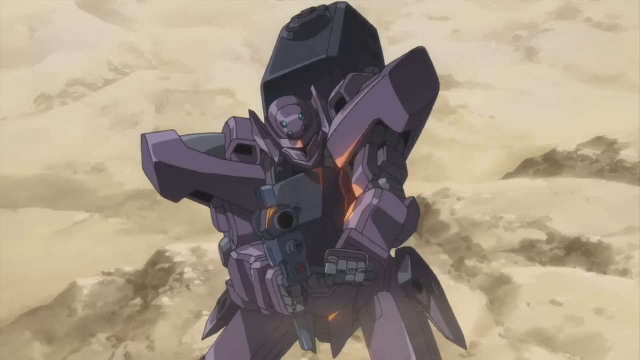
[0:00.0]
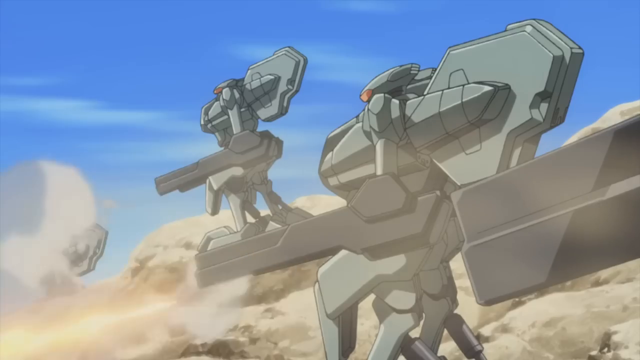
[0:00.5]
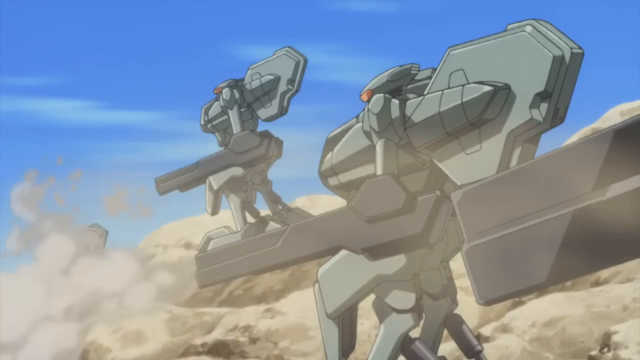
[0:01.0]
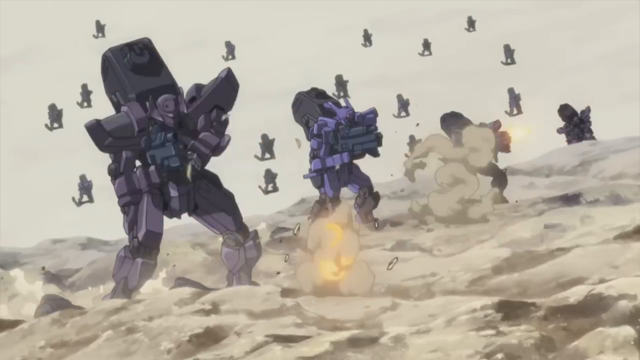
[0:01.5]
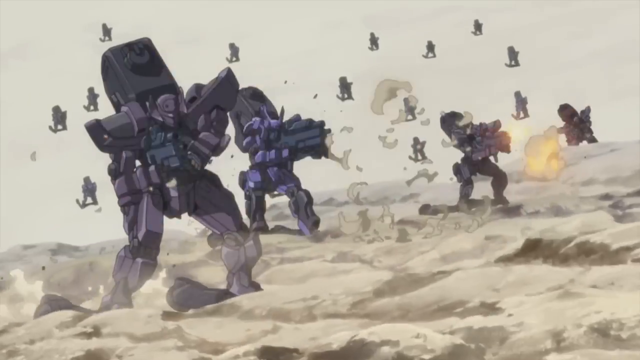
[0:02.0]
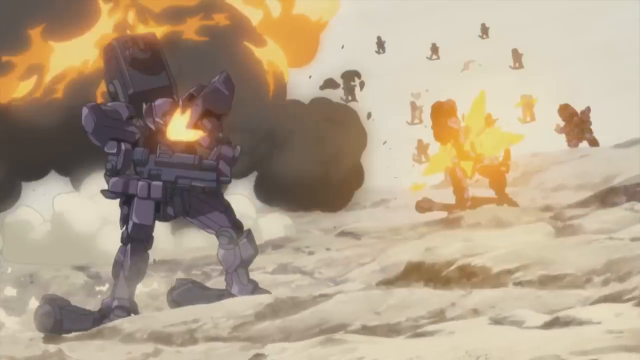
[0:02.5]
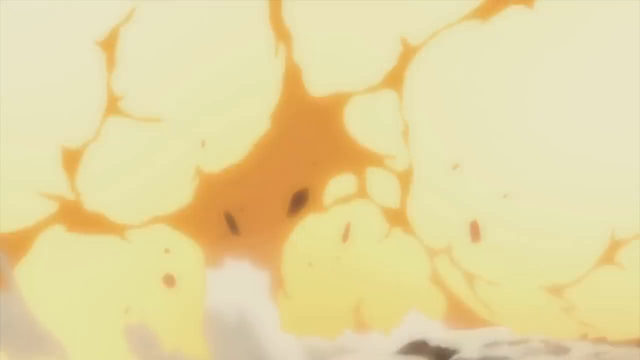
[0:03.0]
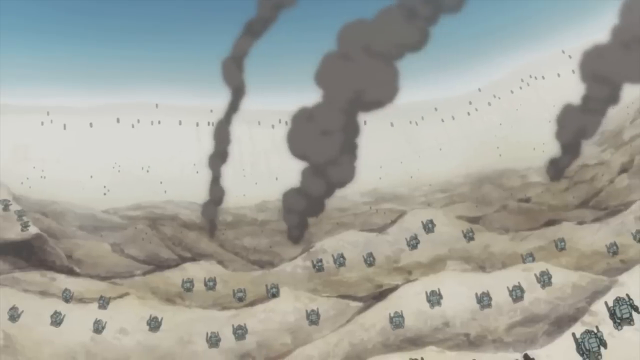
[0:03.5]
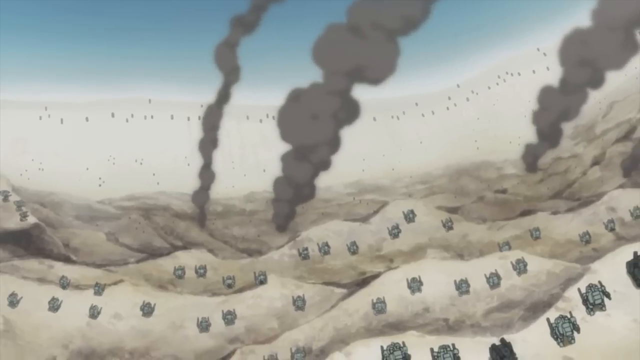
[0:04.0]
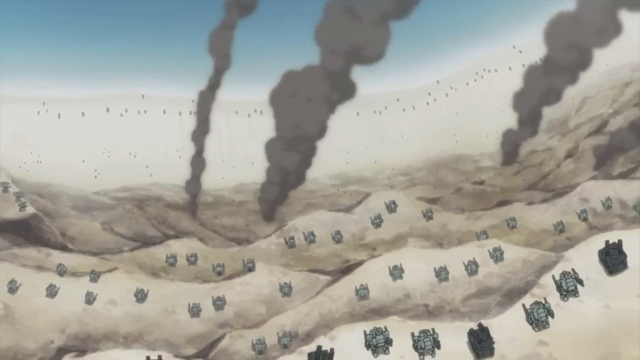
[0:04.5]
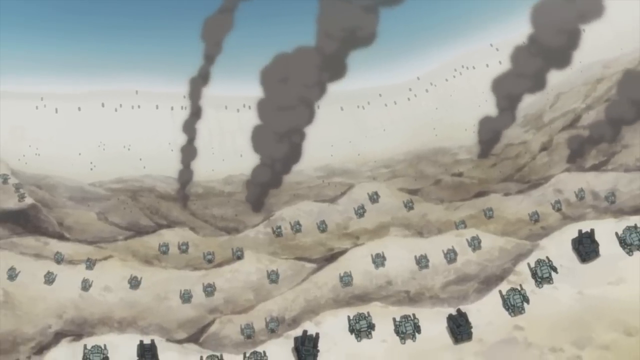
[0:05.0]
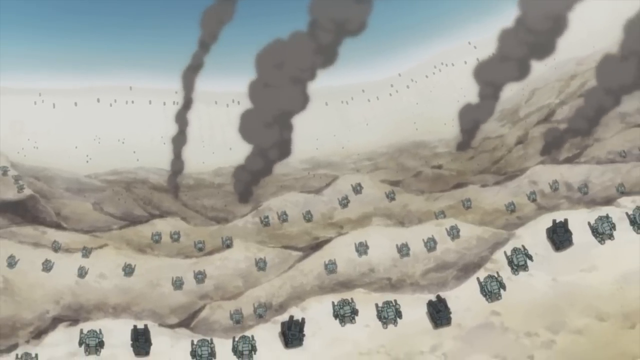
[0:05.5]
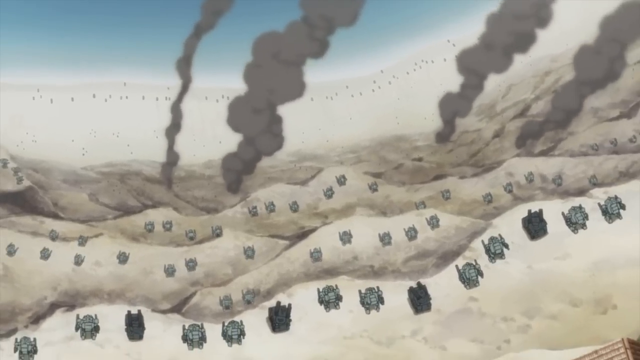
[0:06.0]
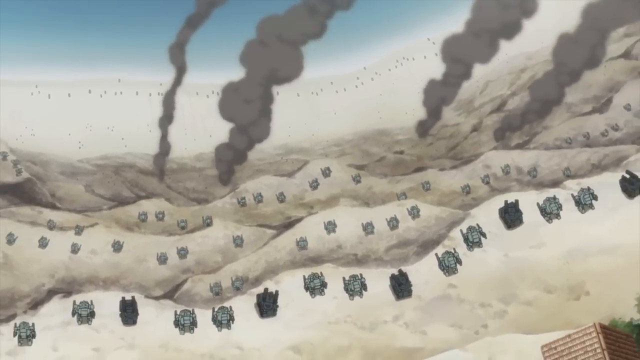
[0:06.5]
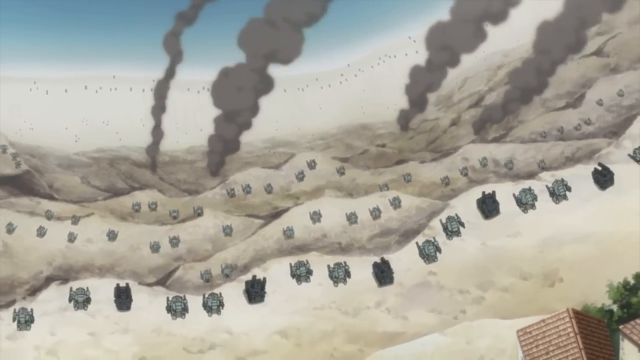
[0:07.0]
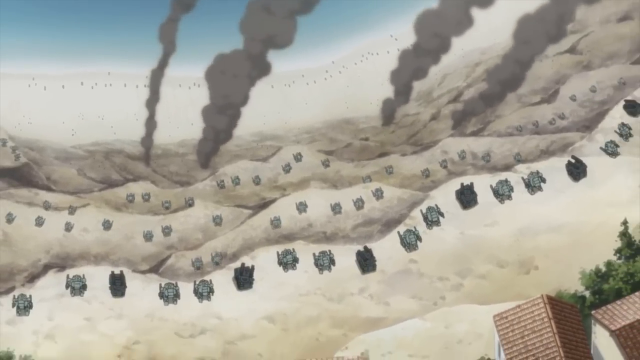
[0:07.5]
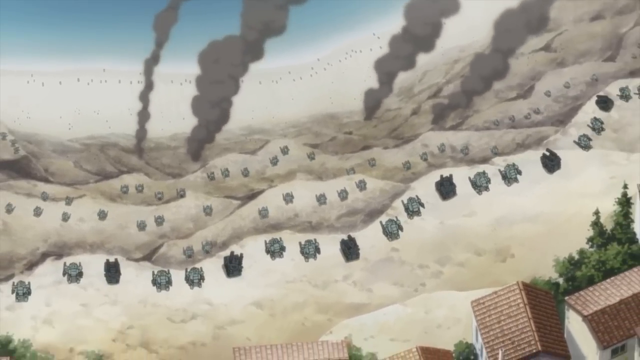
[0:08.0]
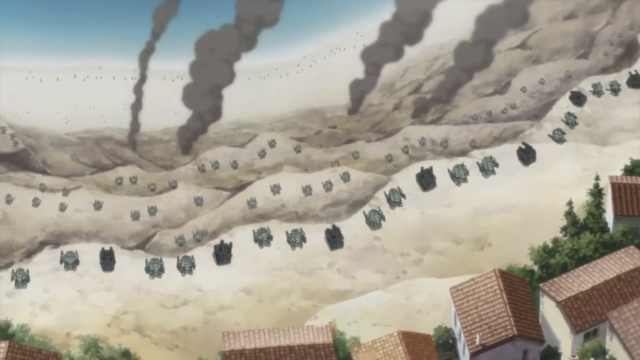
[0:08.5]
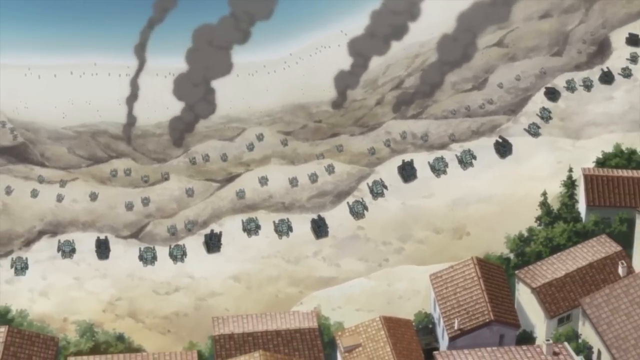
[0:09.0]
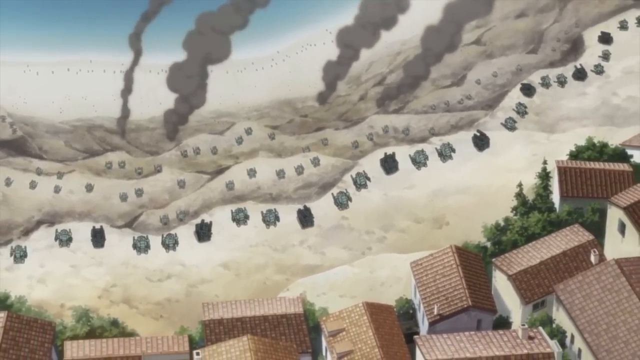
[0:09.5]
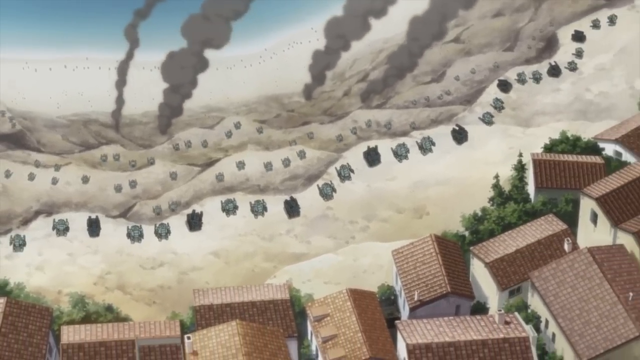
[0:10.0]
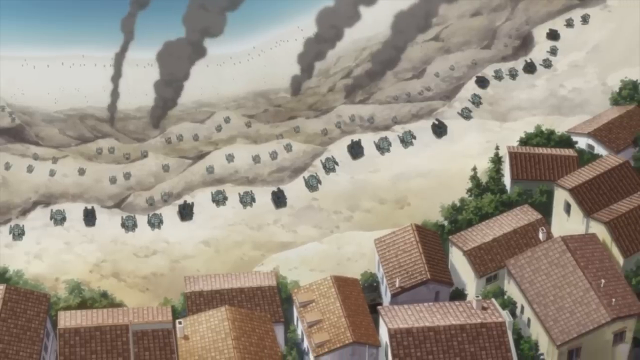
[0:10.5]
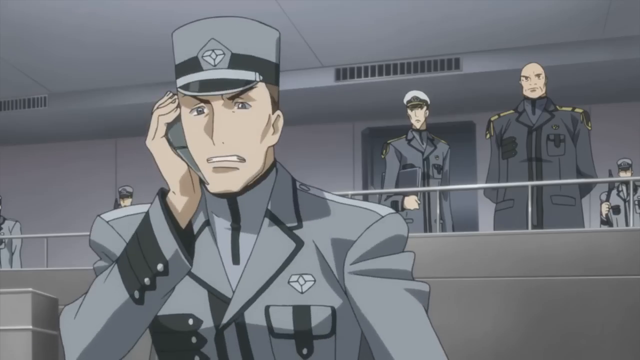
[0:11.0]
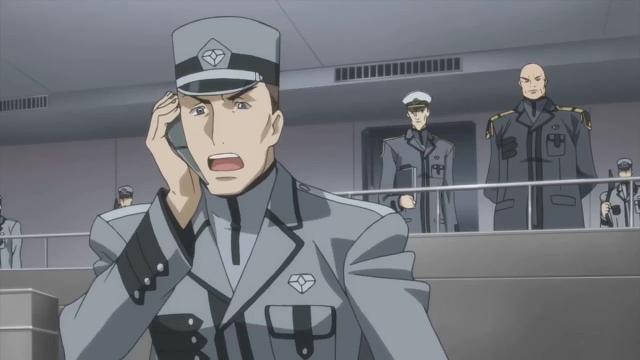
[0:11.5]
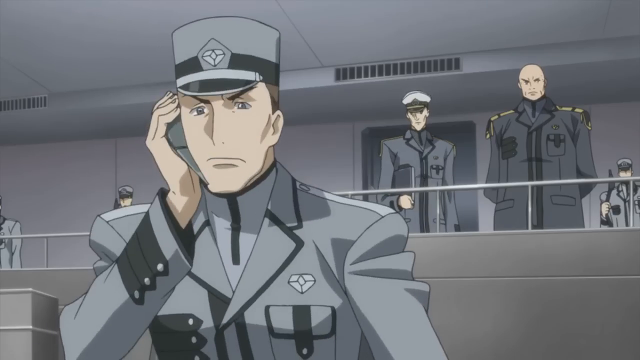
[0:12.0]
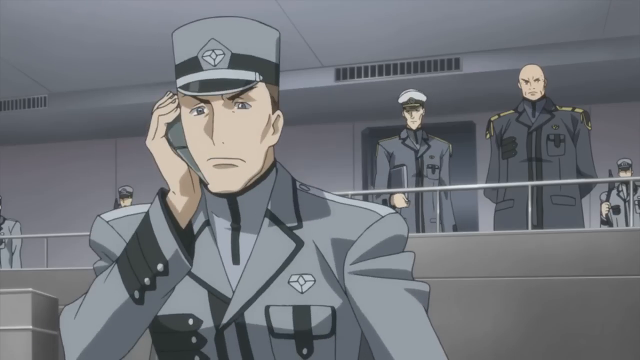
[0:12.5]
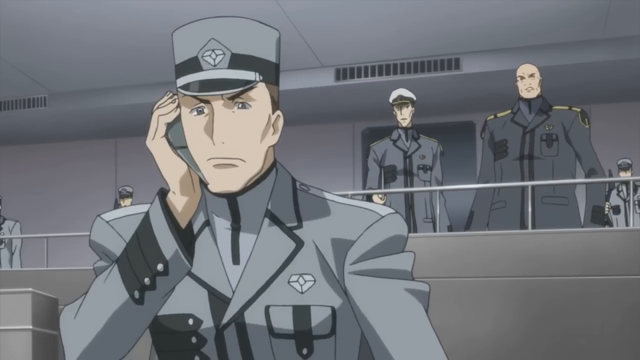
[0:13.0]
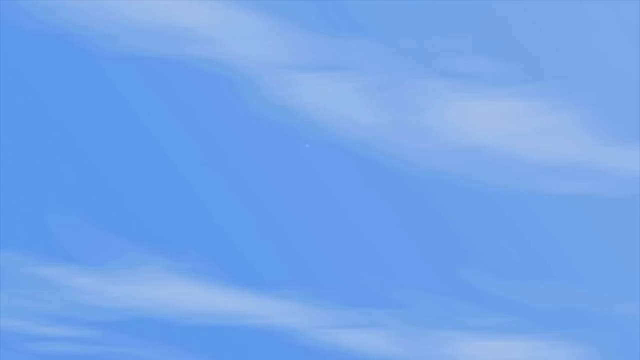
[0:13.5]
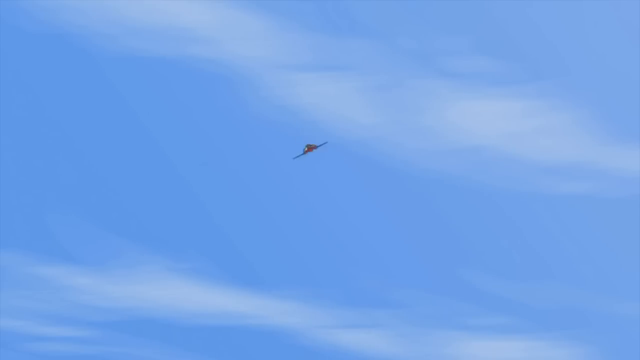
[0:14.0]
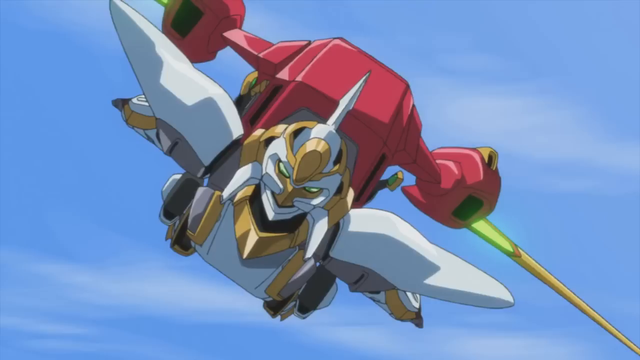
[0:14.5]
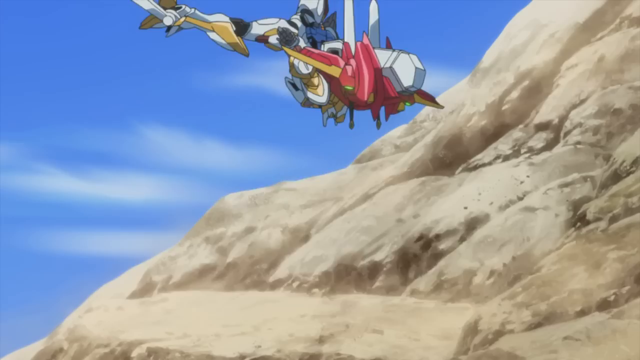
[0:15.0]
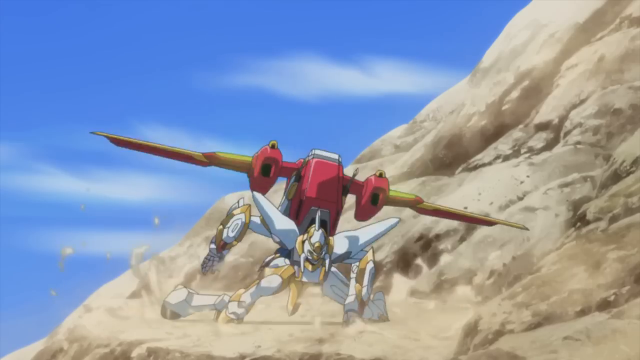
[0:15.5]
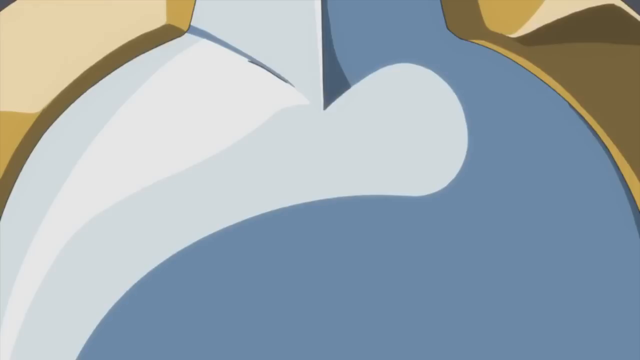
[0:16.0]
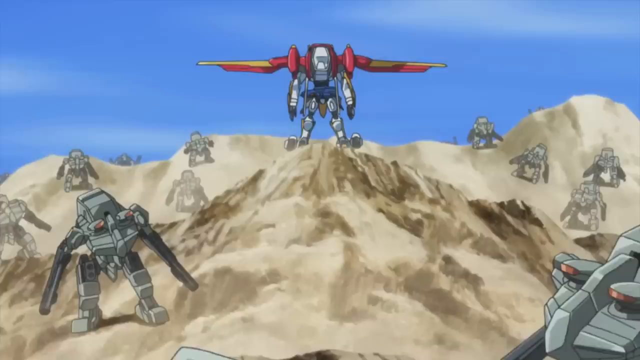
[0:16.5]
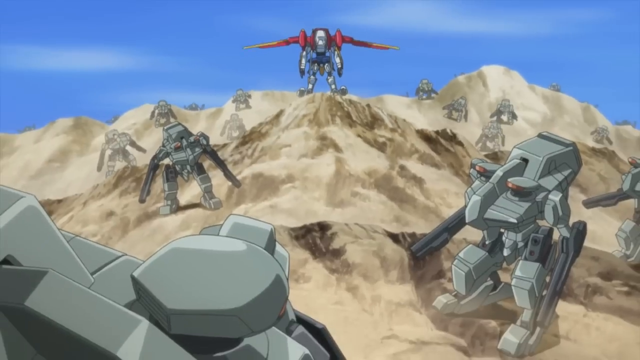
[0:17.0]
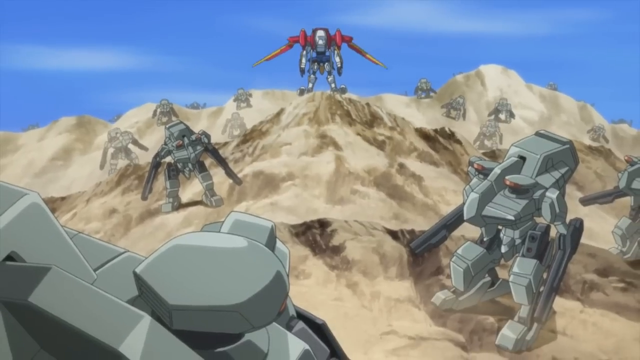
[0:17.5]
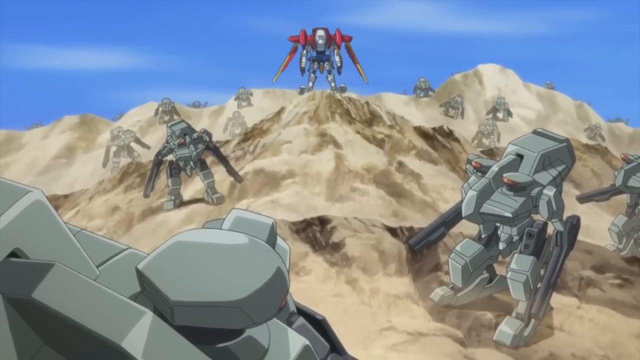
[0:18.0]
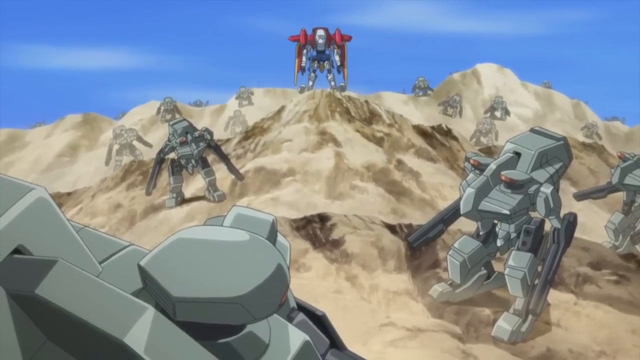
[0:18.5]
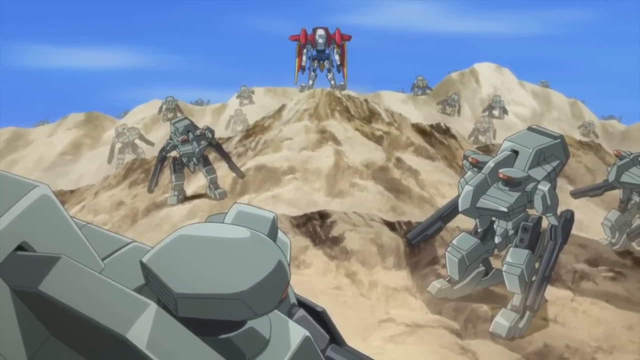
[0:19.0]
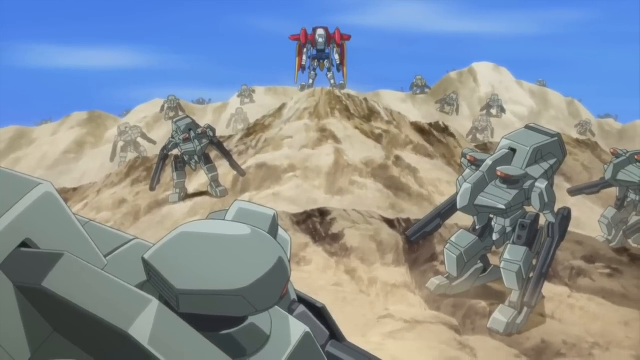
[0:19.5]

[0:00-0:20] The scene looks futuristic, with mountains and lots of rooftops. There appear to be robots planning some type of war. Some of the robots are gray, and some look really tall. They are standing in a field-type area, and smoke is visible. Some of the robots are colorful; the main leader seems to have red armor on his body. The houses look white, and the rooftops are brown. The only humans shown look like soldiers dressed in gray, and the human leader can be identified by his sergeant hat.